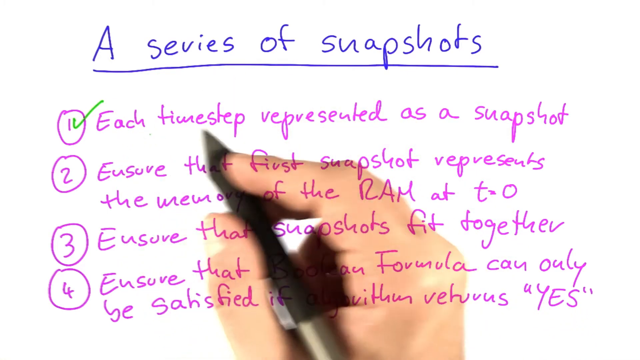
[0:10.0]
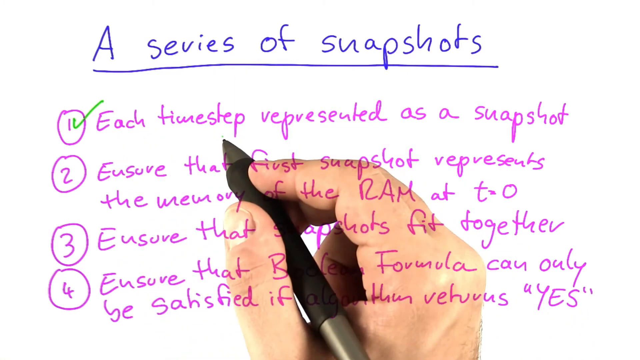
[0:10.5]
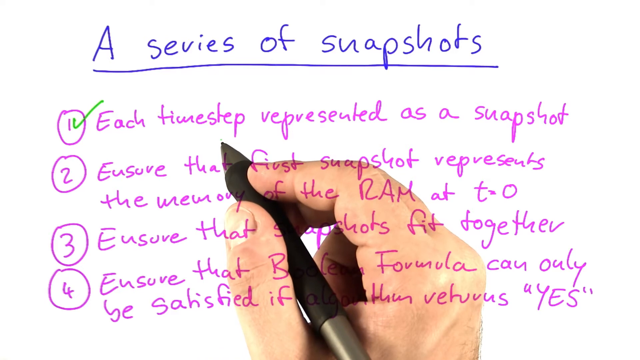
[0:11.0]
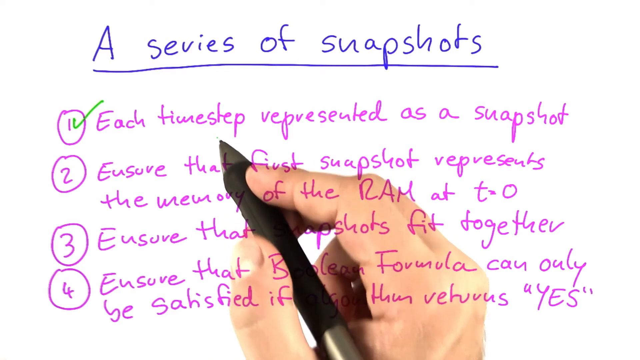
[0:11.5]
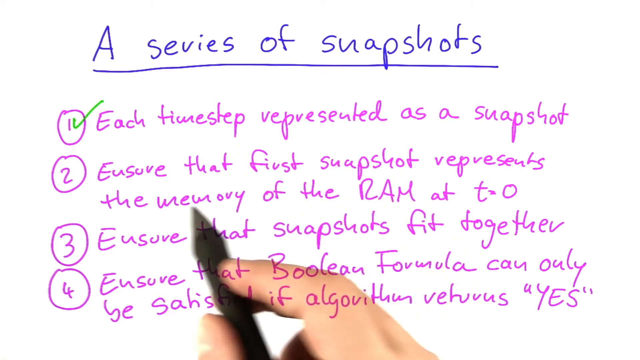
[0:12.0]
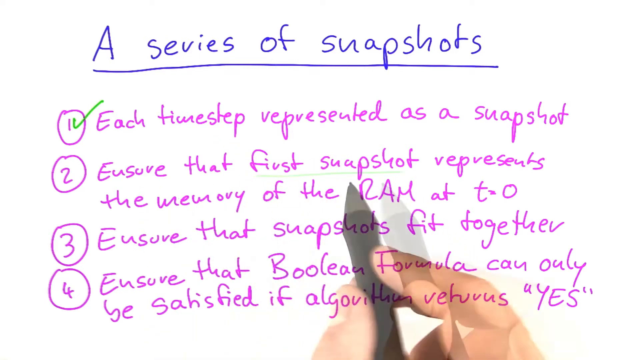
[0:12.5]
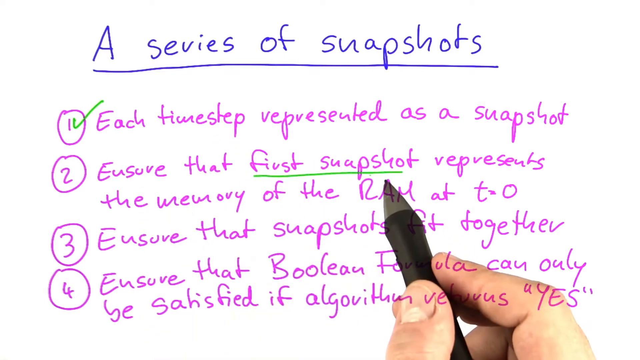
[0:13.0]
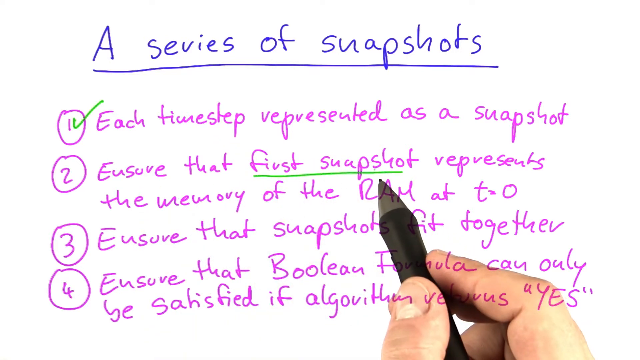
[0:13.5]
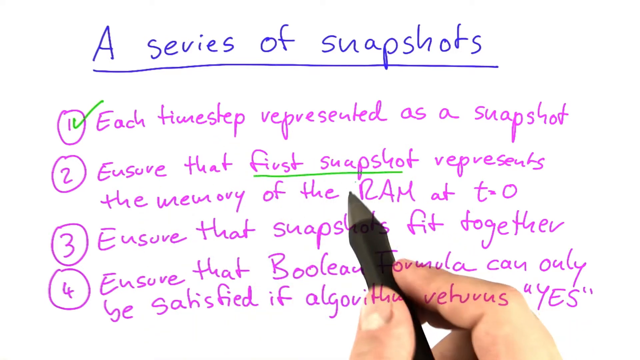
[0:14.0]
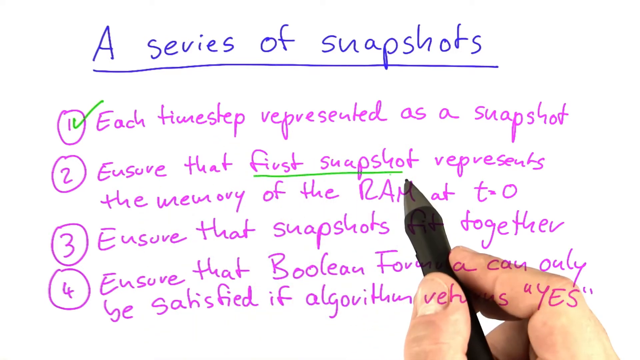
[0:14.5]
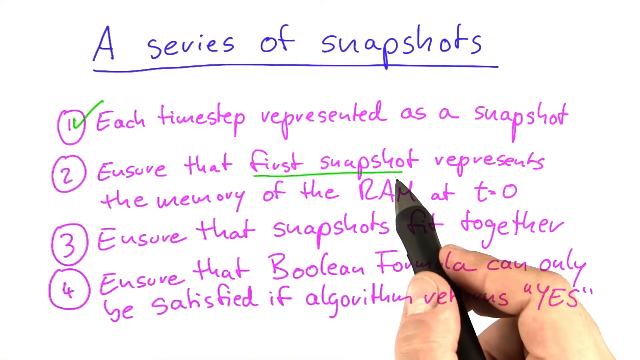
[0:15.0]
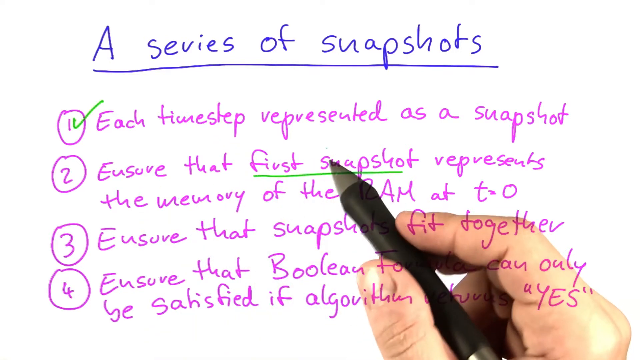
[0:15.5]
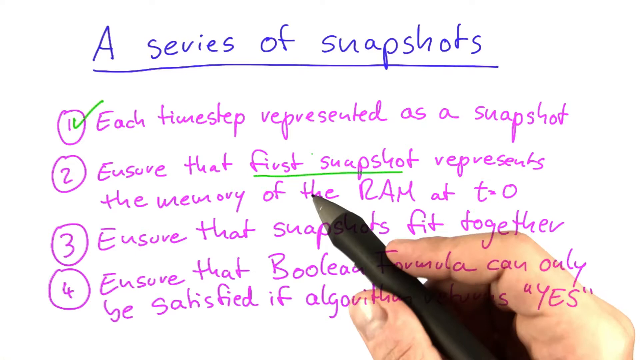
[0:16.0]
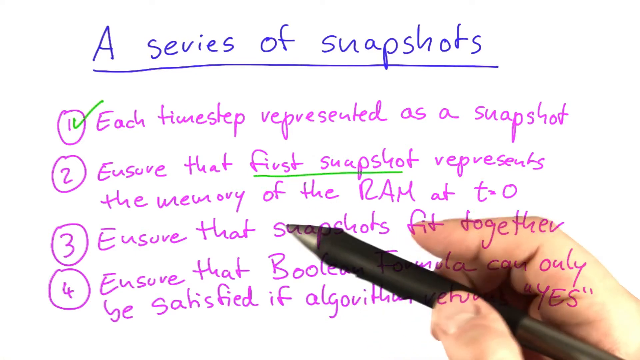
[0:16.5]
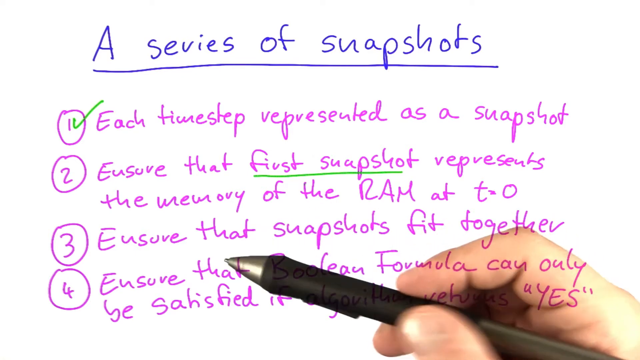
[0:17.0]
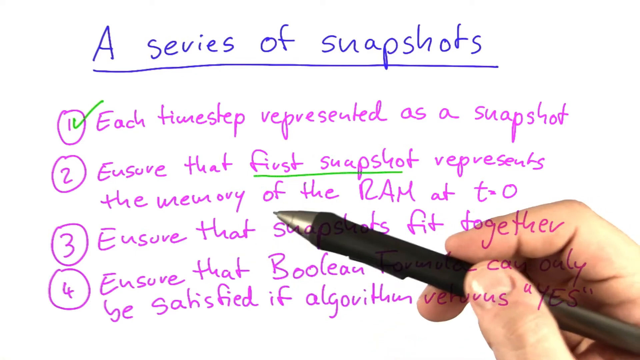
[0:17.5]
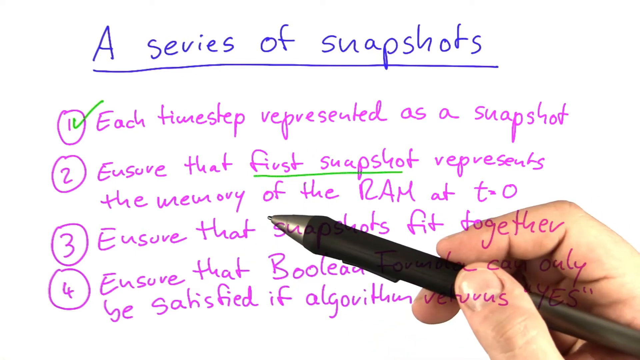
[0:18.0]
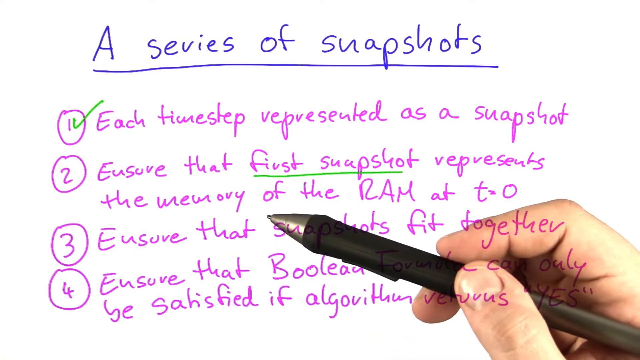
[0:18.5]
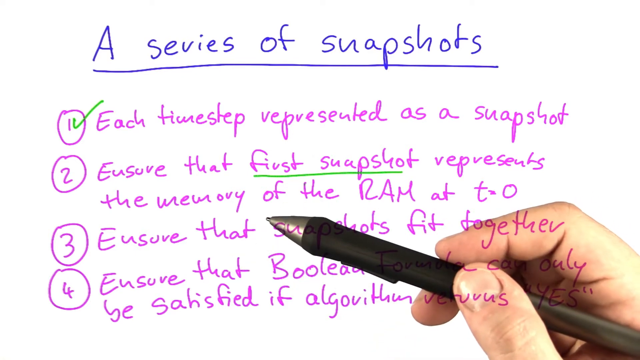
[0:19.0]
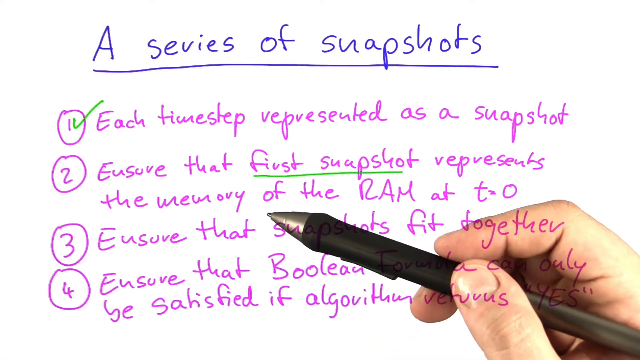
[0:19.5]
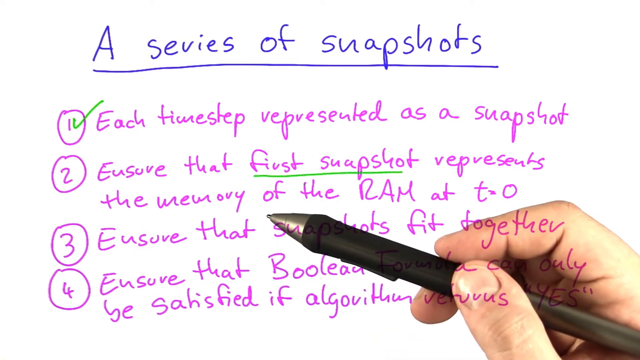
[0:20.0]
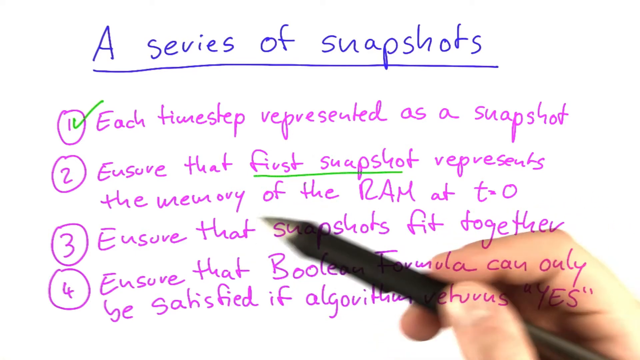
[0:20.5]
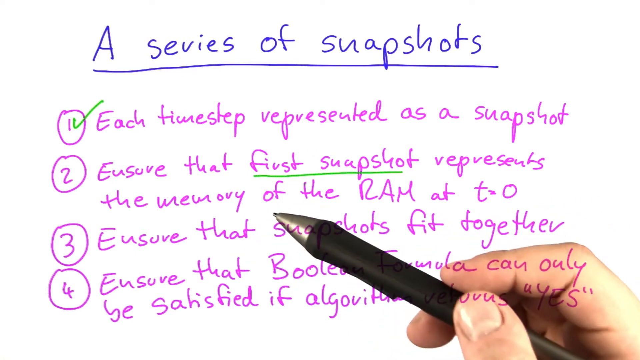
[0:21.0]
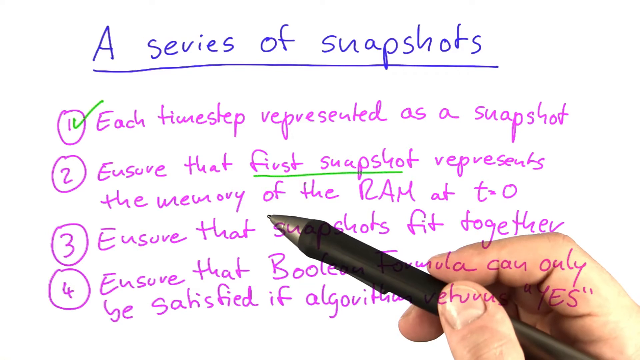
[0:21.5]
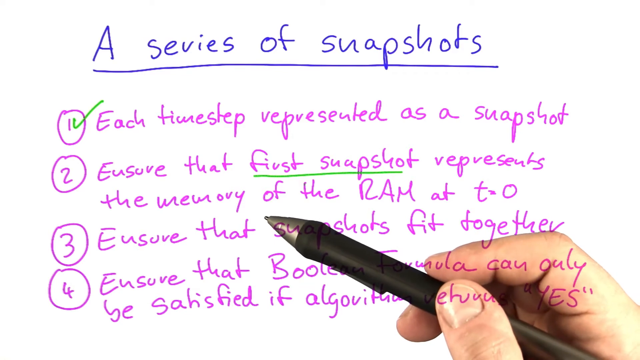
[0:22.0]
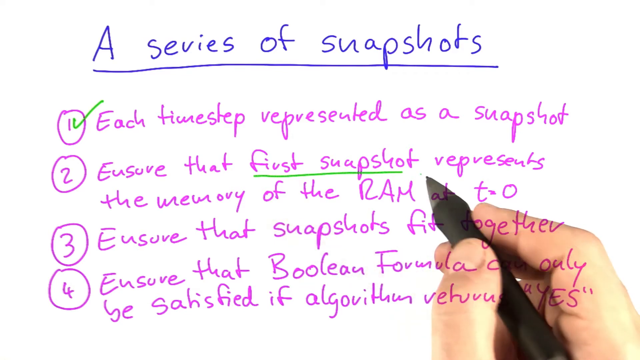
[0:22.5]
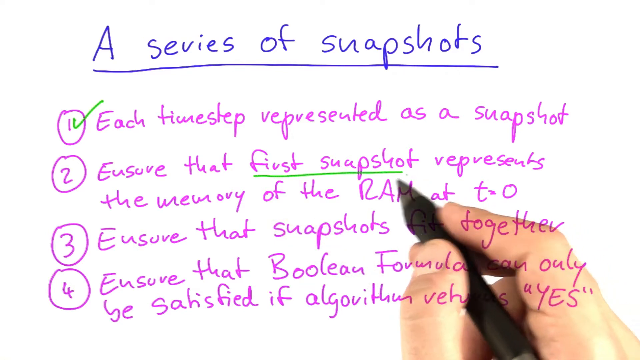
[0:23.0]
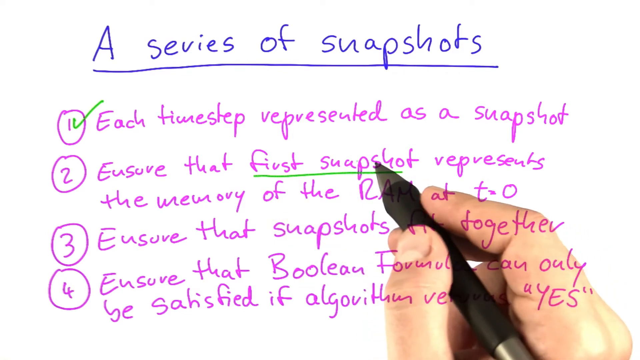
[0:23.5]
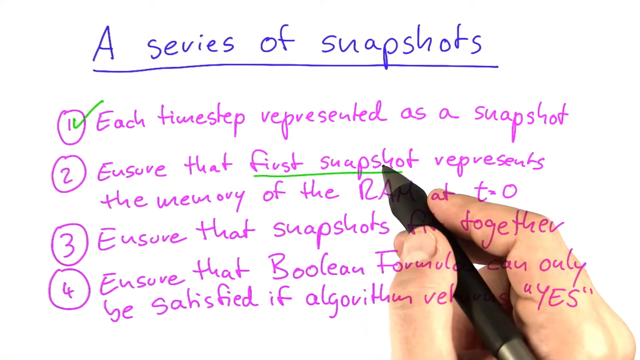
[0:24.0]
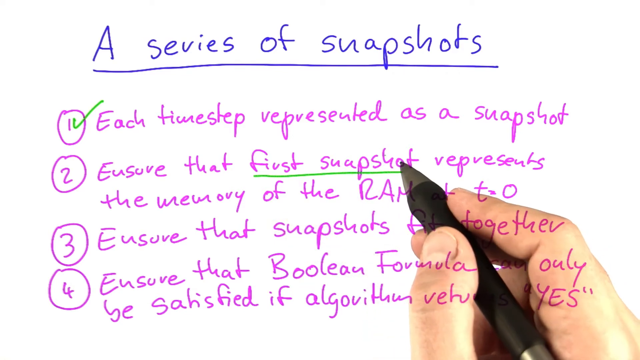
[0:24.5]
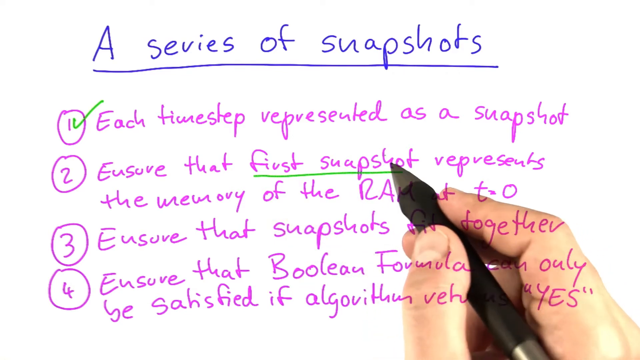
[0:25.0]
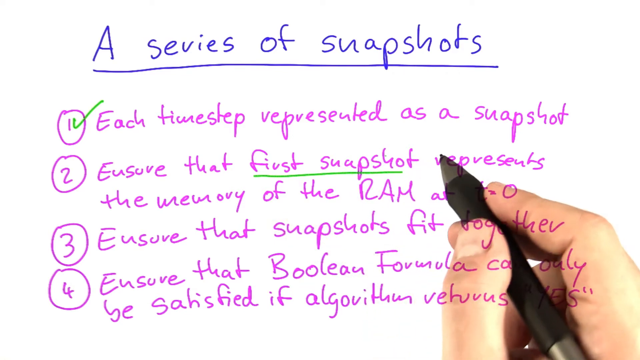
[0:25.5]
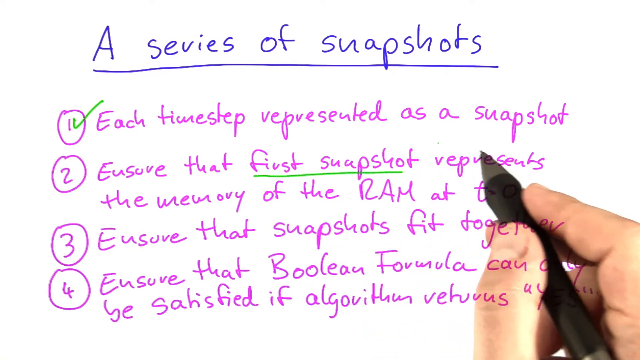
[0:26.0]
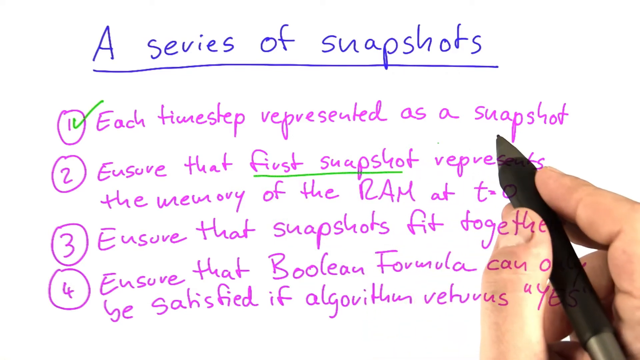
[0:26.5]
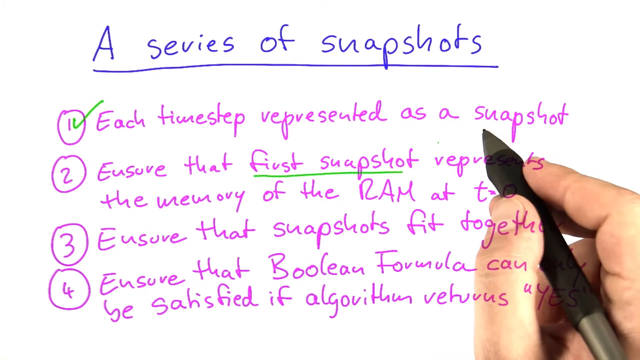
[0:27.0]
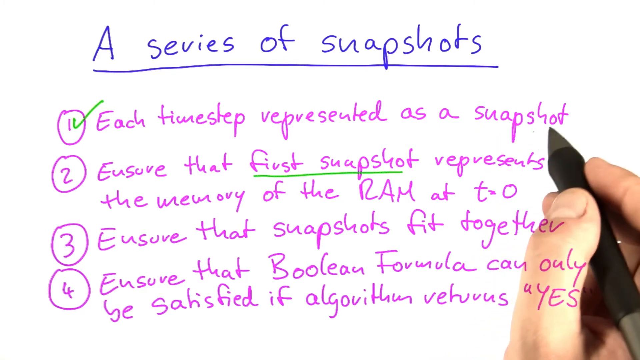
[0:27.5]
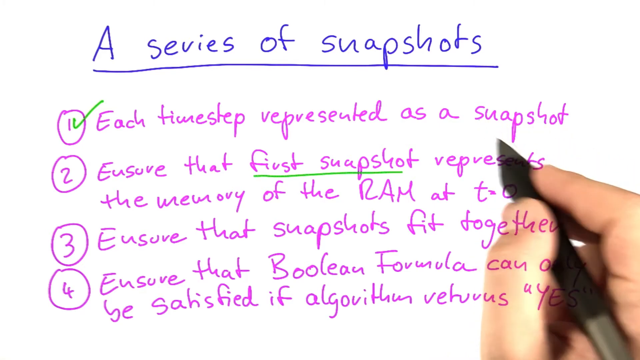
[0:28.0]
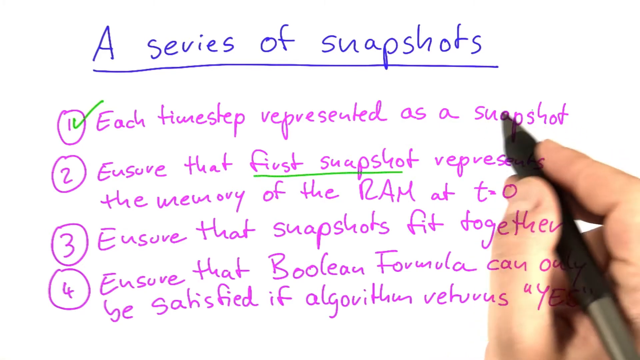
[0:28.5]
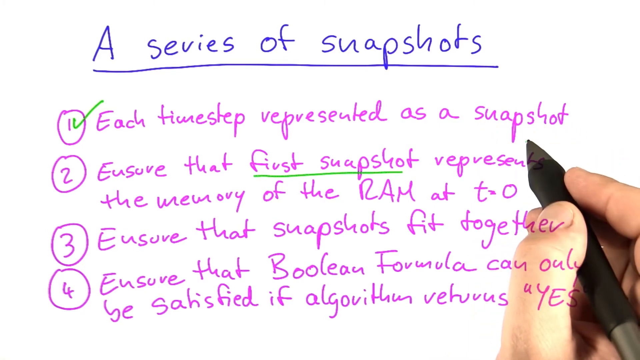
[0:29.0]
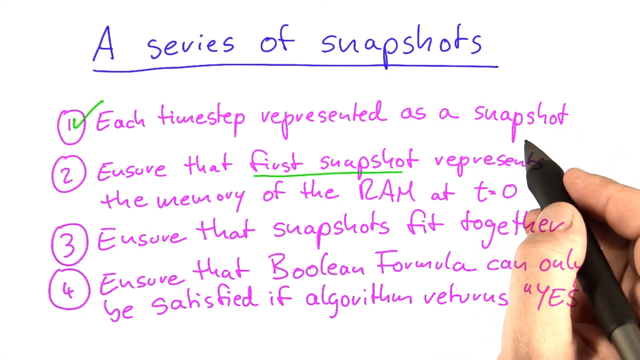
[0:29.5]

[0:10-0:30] The picture quality appears clearer than at the start. There are four sentences written in pink under a topic, "a series of snapshots," written in blue. Step number one is ticked in red, while the other three sentences are not ticked. The sentences include text such as "ensure that the snapshots fit together." His hand holding the pen is visible, apparently his right hand. He seems to be teaching people about snapshots, apparently in a video made for YouTube using a laptop.